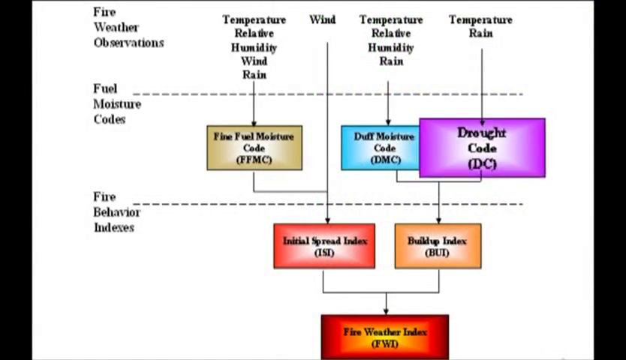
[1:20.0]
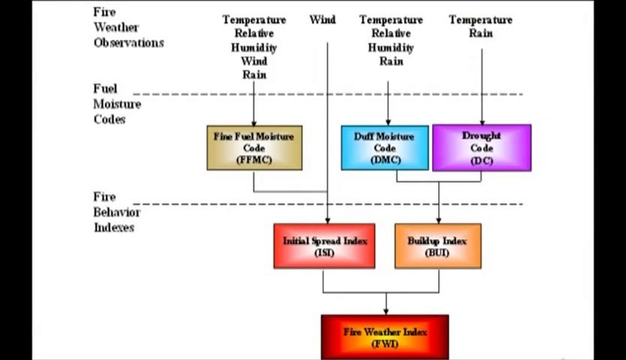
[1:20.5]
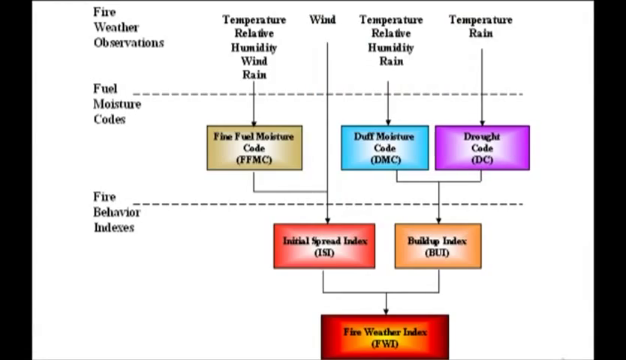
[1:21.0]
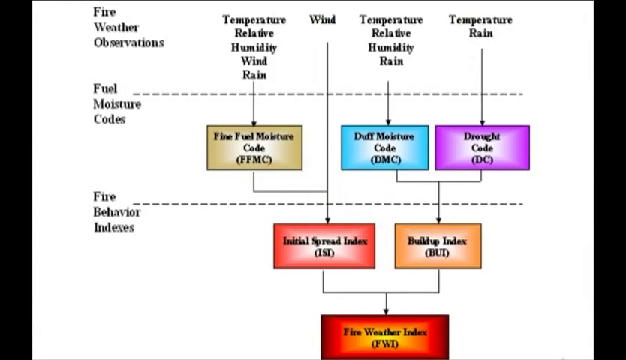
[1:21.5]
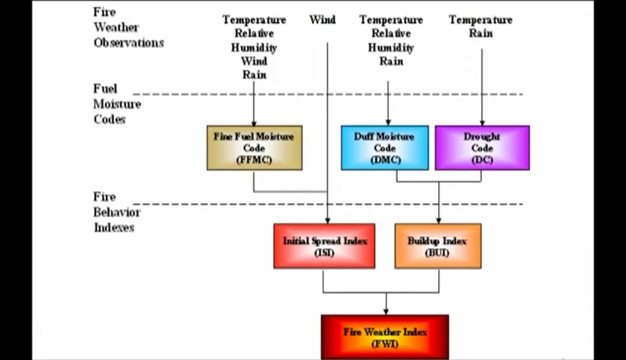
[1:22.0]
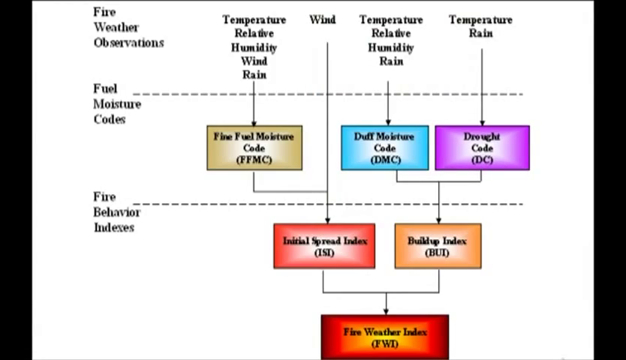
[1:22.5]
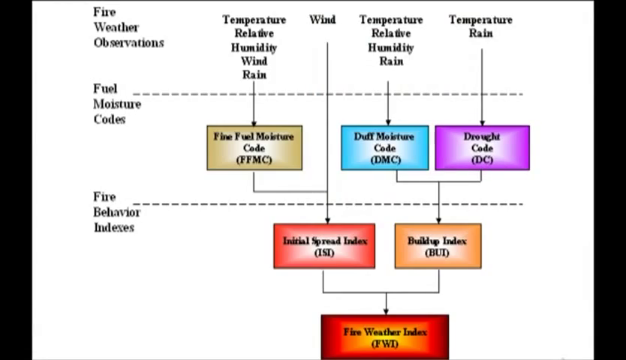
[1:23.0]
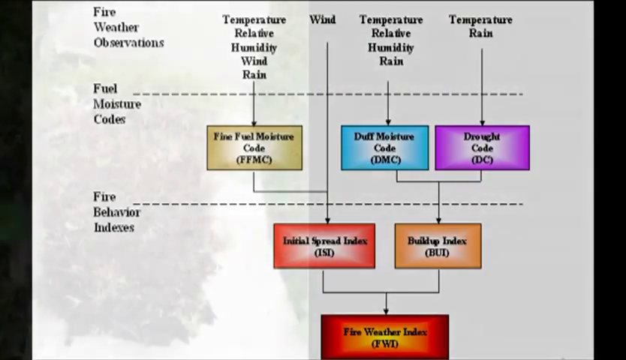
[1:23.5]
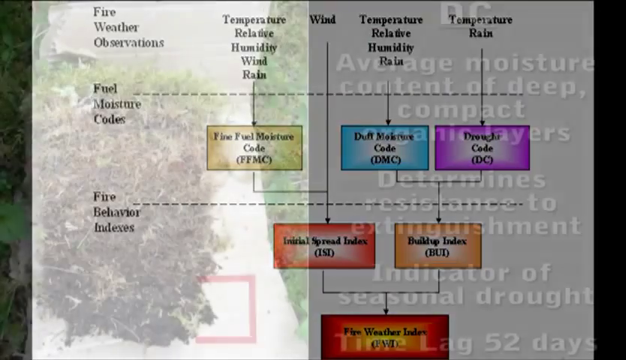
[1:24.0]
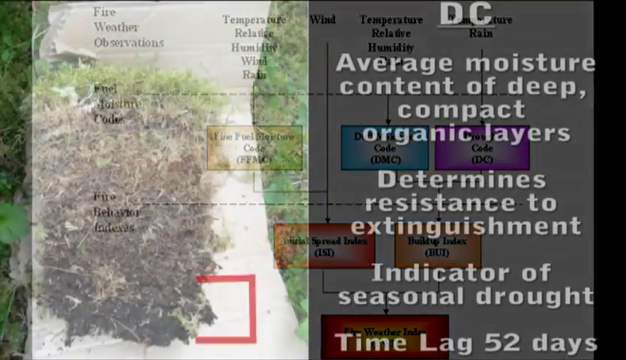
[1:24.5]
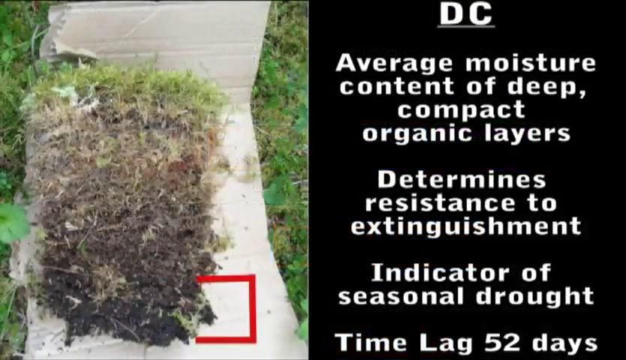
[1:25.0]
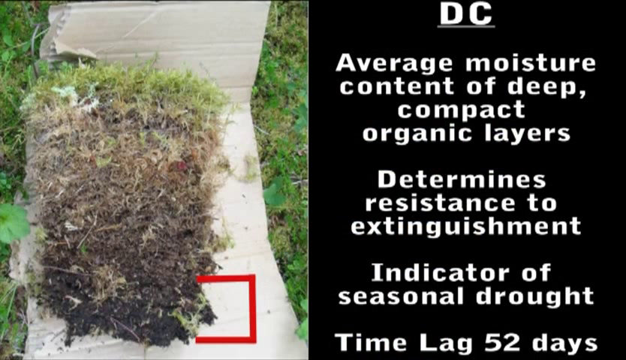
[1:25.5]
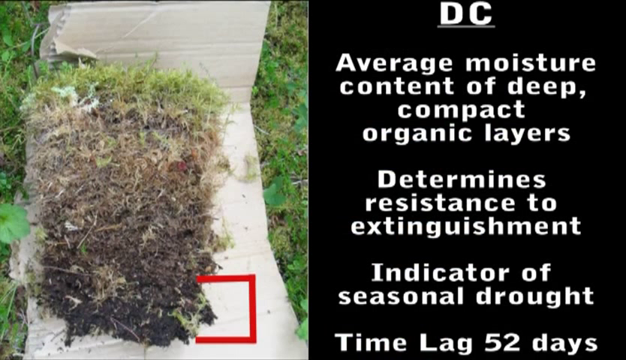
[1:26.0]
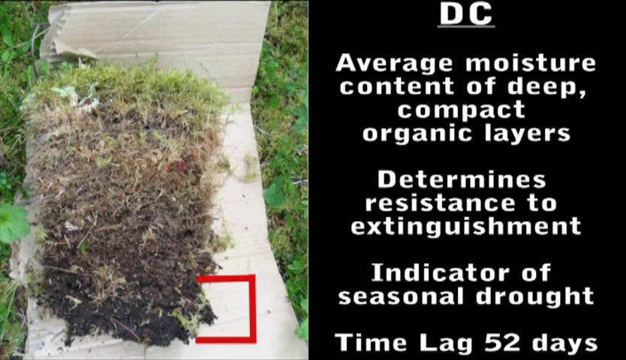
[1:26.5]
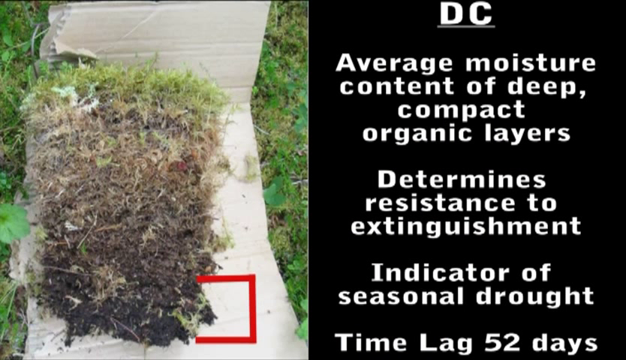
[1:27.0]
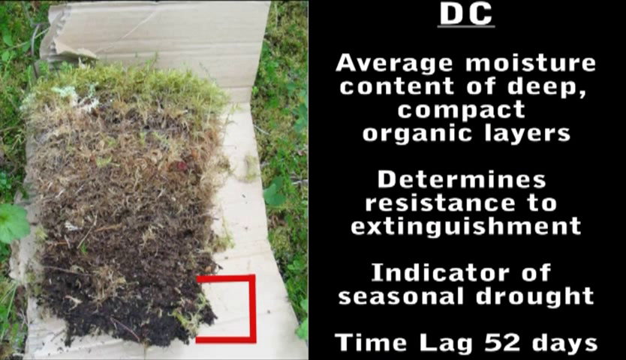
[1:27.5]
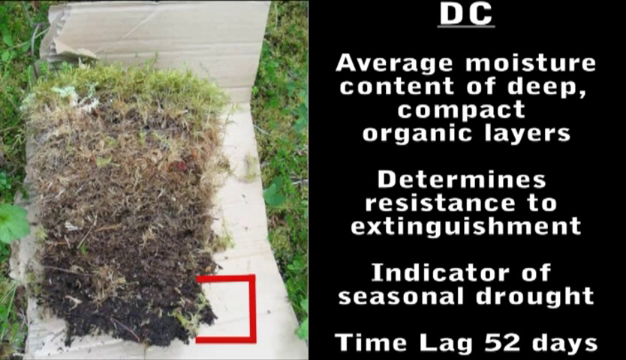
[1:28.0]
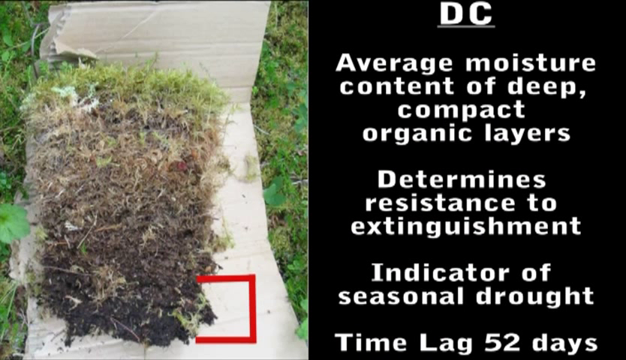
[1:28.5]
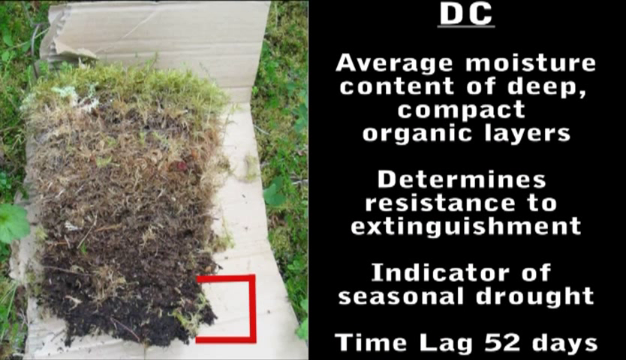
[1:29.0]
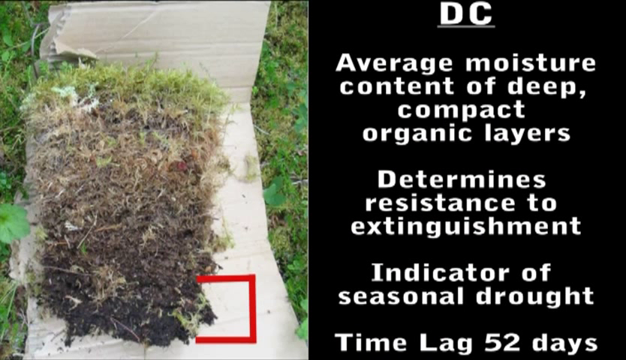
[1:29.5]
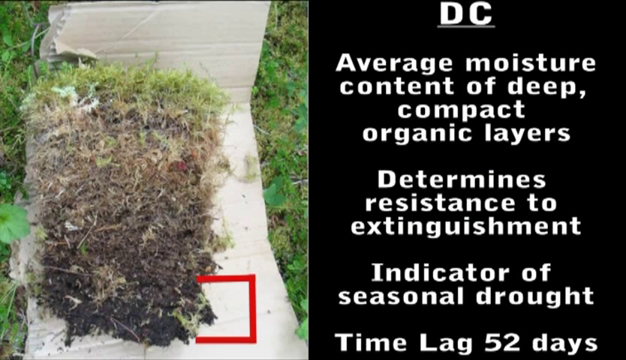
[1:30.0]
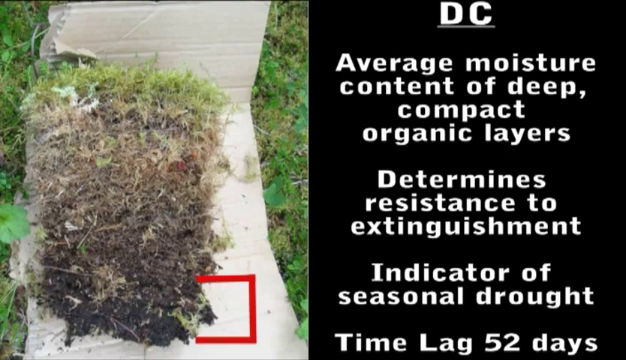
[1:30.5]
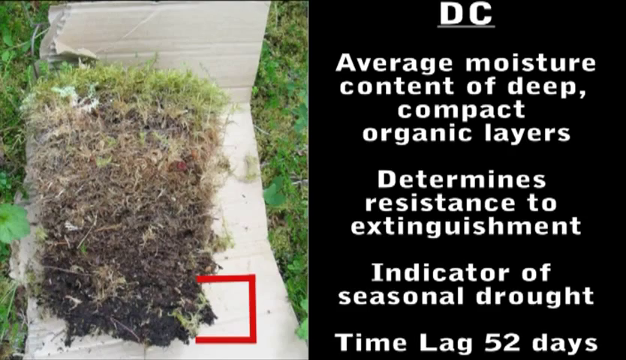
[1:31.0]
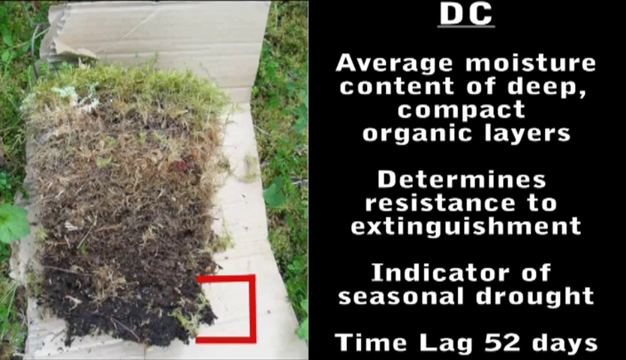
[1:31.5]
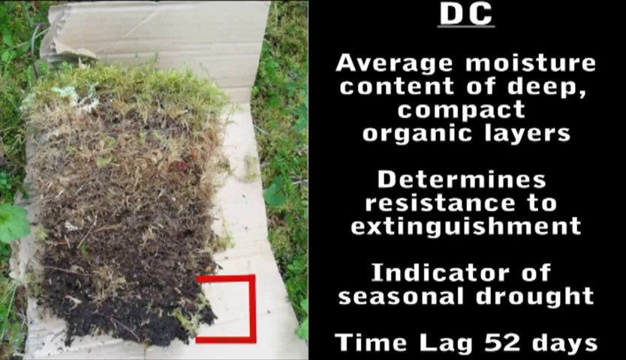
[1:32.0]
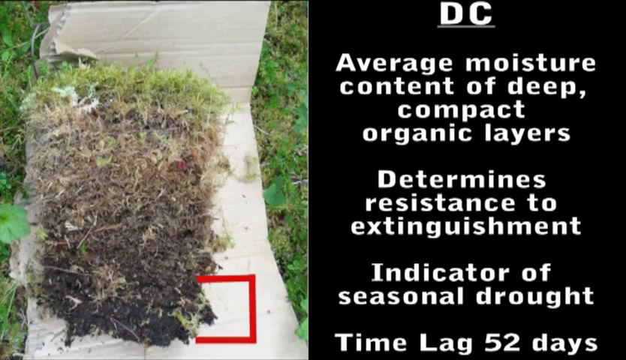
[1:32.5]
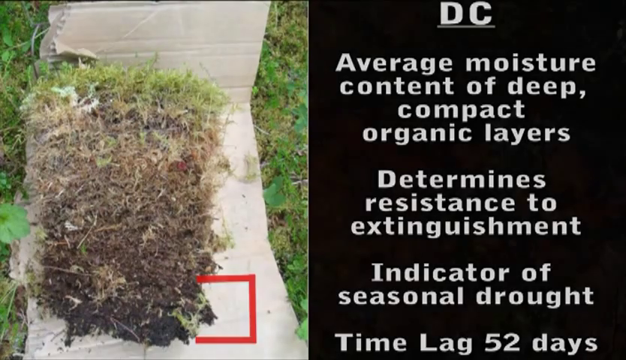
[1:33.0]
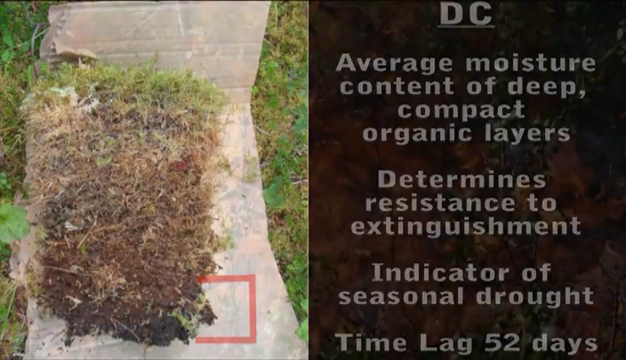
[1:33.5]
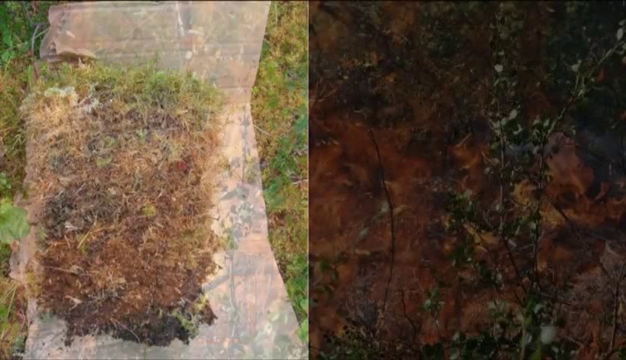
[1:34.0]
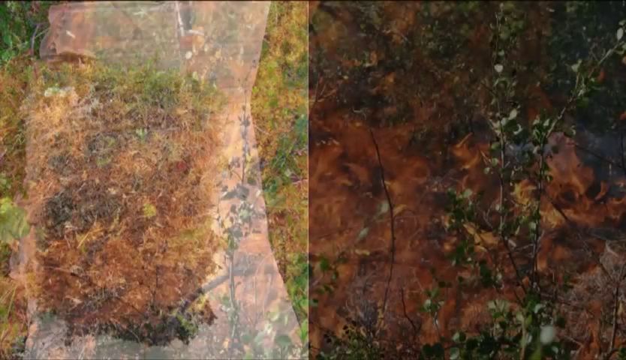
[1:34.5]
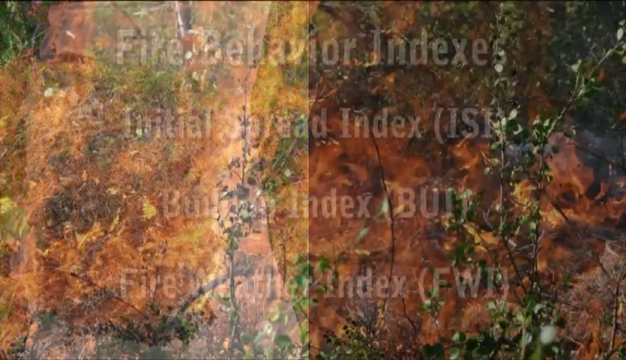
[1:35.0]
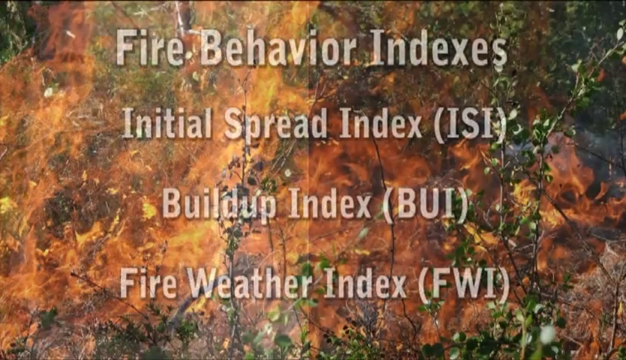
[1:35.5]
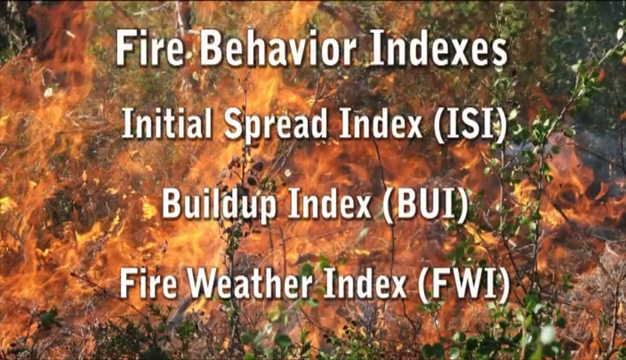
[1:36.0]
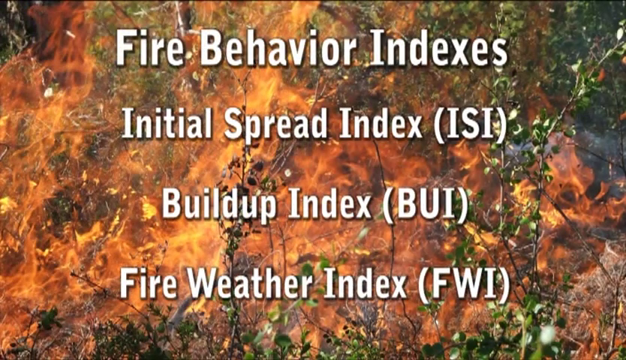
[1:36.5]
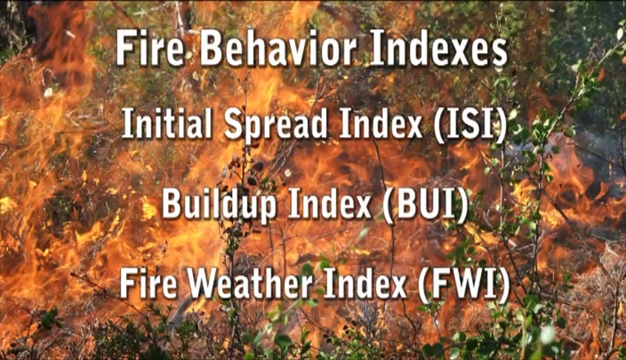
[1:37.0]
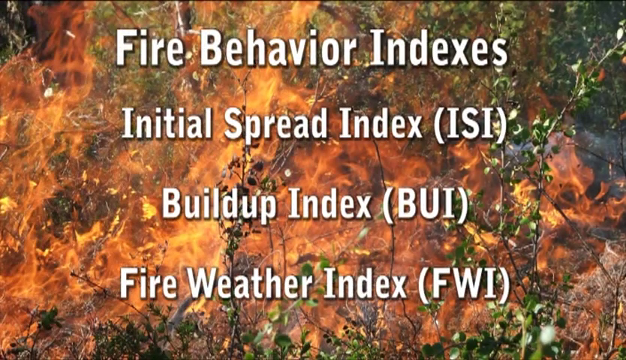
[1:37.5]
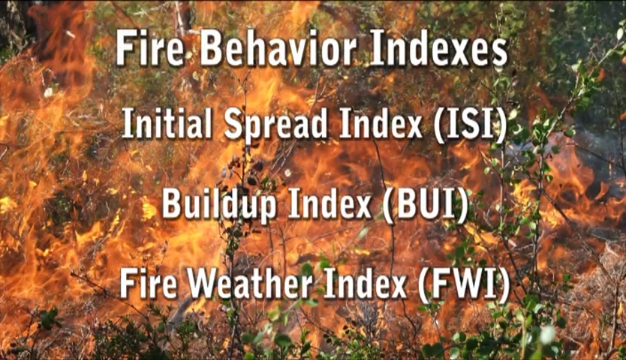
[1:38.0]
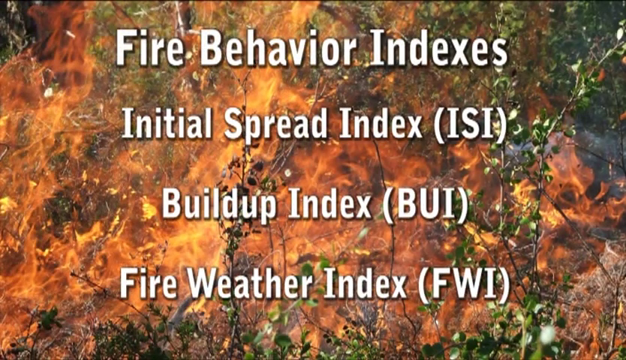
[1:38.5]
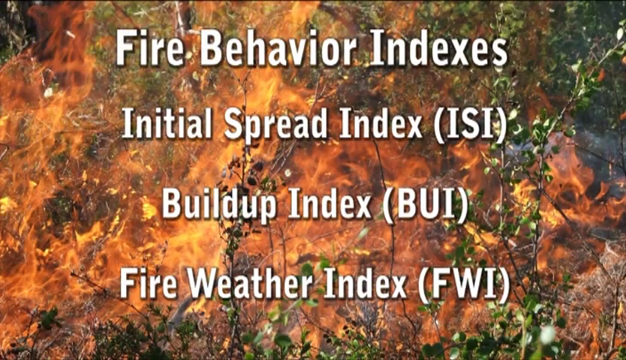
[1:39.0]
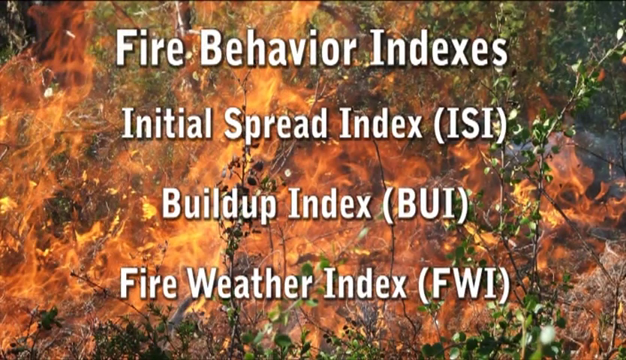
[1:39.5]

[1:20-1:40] A color-coded box chart starts at the top and works its way down to one final box. Among the top boxes is a blue box reading "duff moisture code," with a purple box to its right reading "drought code." Underneath those three top boxes are two boxes: on the left a red box reading "initial spread index," and to its right an orange box reading "buildup index." Below both, at the bottom, is a darker red box reading "fire weather index." Across the top, not in a box, the text reads from left to right "fire weather observations," "temperature, relative humidity, wind and rain," then "wind and temperature, relative humidity and rain," and then "temperature and rain."